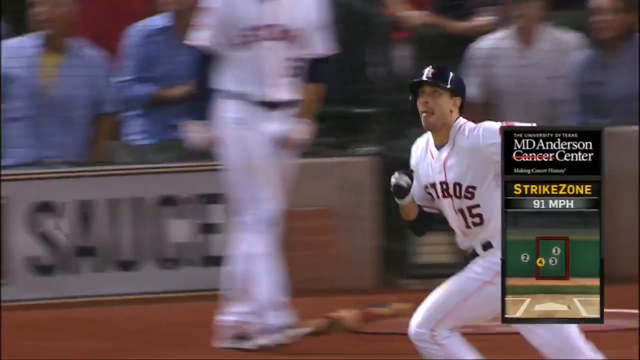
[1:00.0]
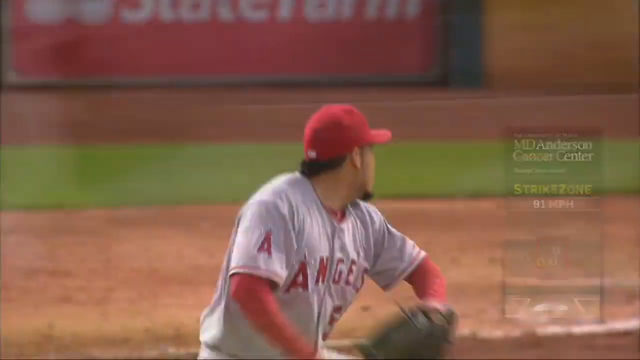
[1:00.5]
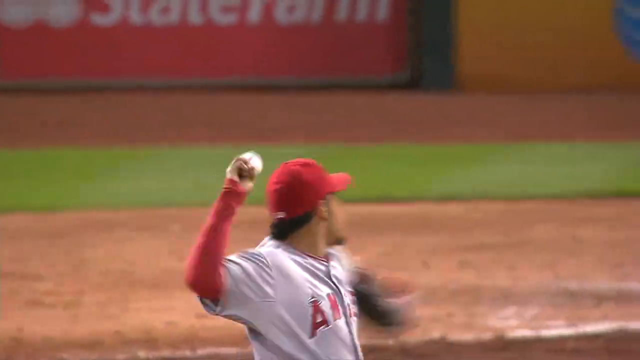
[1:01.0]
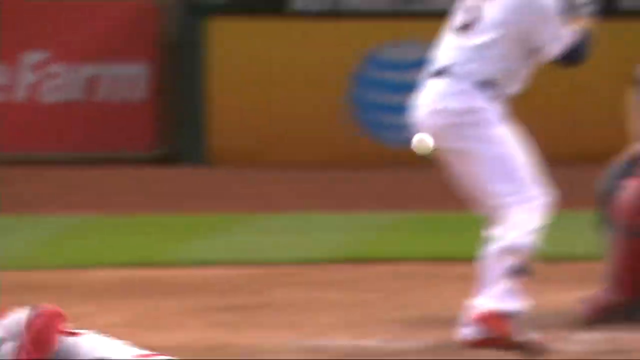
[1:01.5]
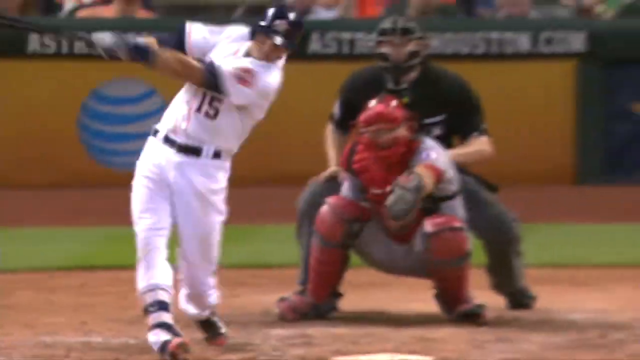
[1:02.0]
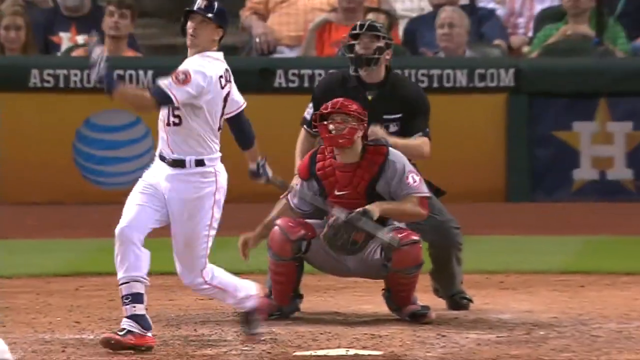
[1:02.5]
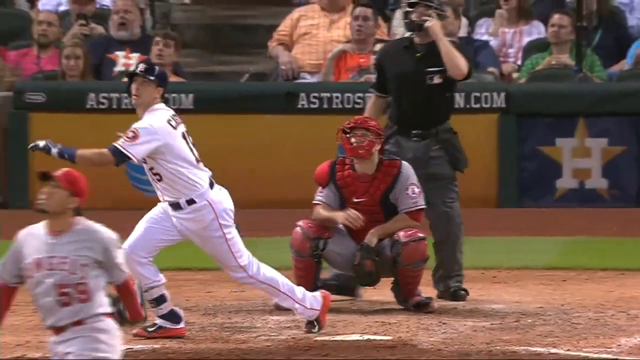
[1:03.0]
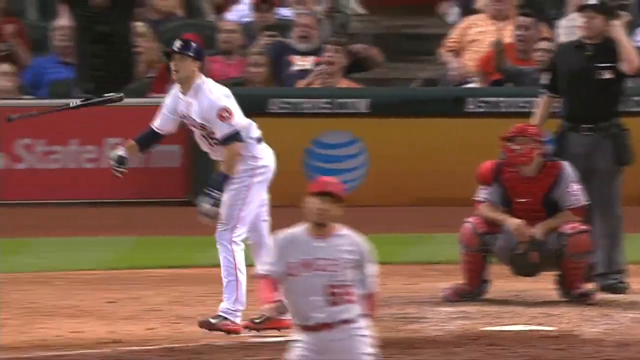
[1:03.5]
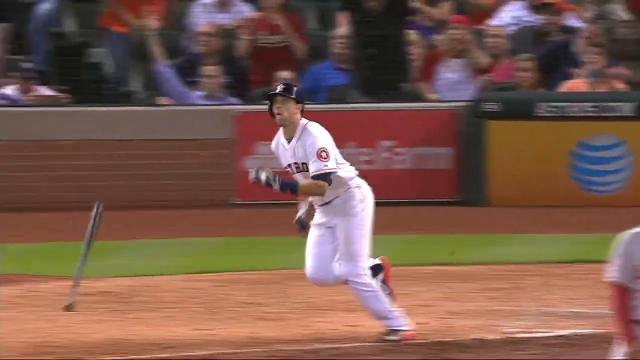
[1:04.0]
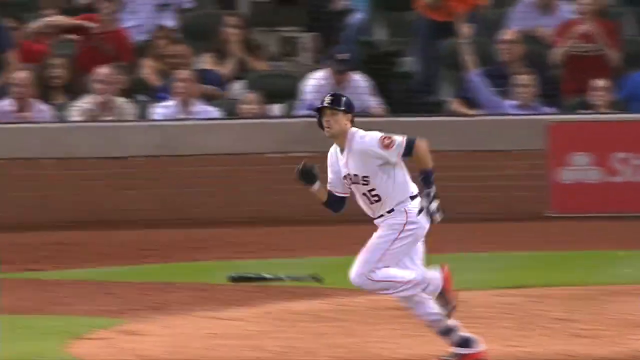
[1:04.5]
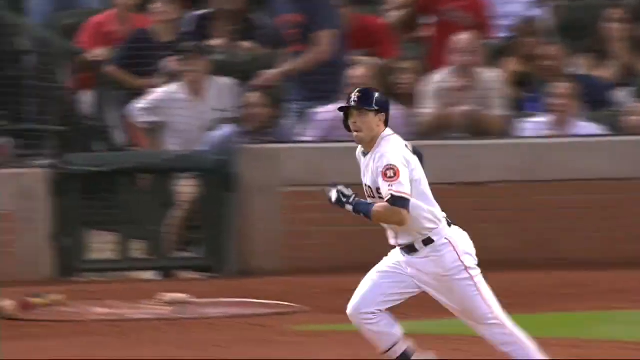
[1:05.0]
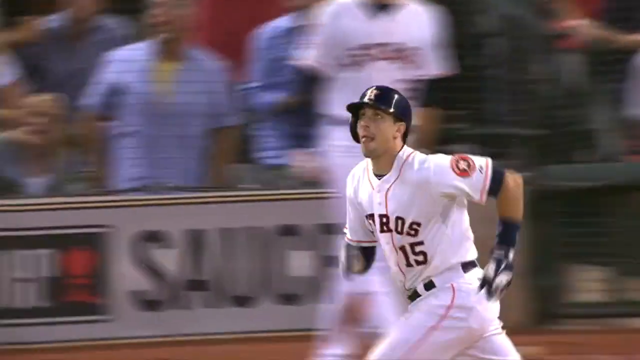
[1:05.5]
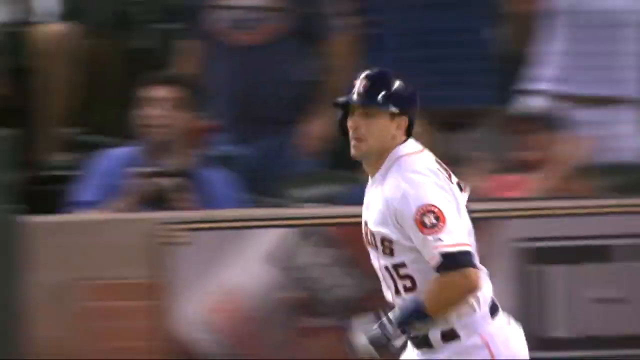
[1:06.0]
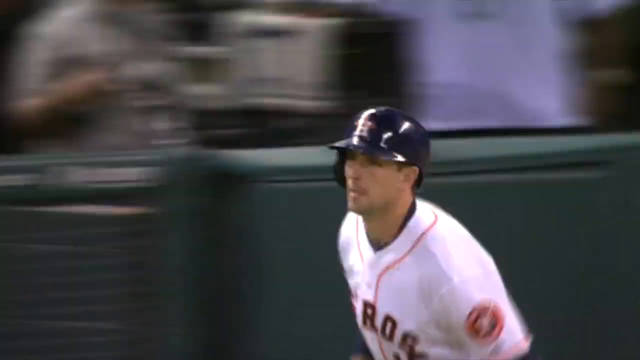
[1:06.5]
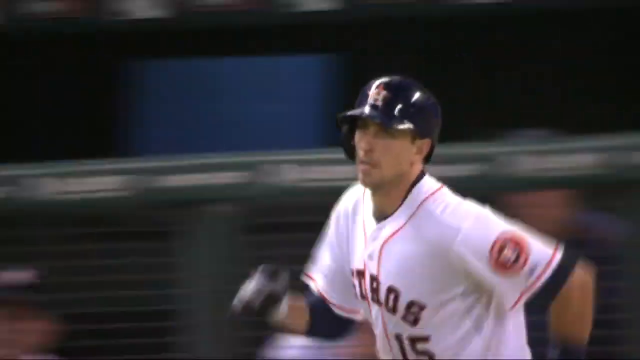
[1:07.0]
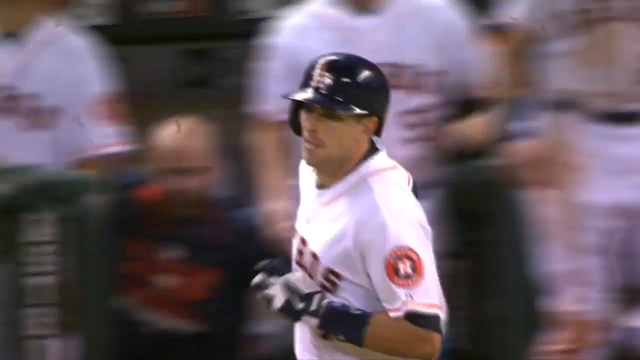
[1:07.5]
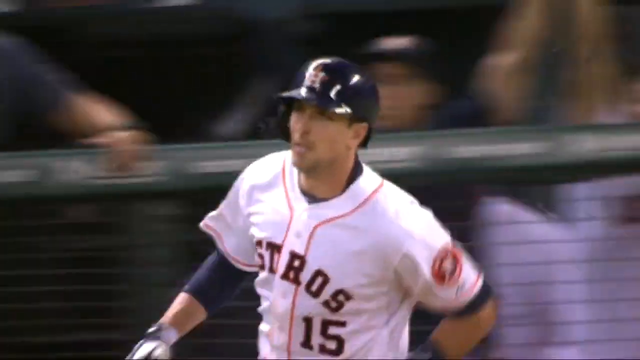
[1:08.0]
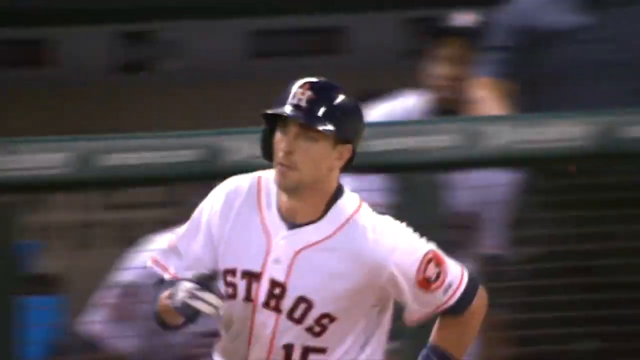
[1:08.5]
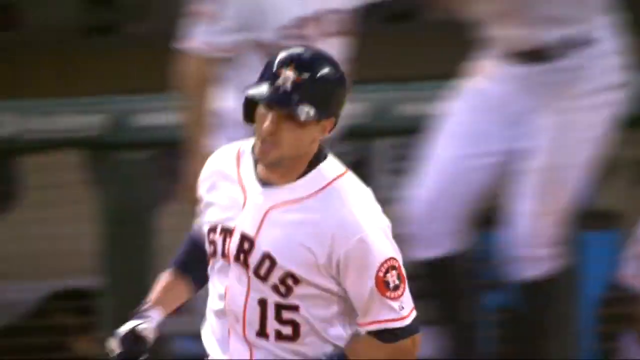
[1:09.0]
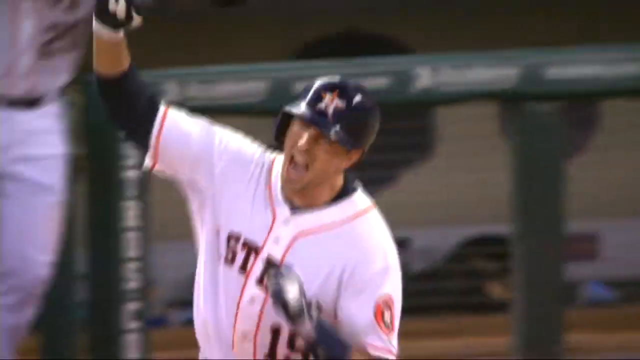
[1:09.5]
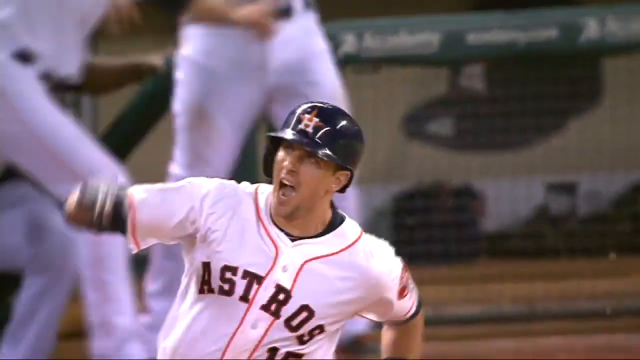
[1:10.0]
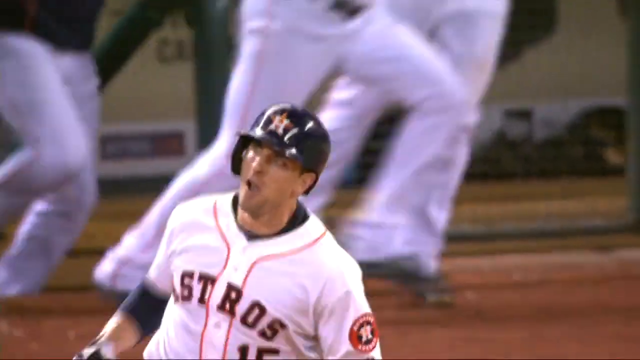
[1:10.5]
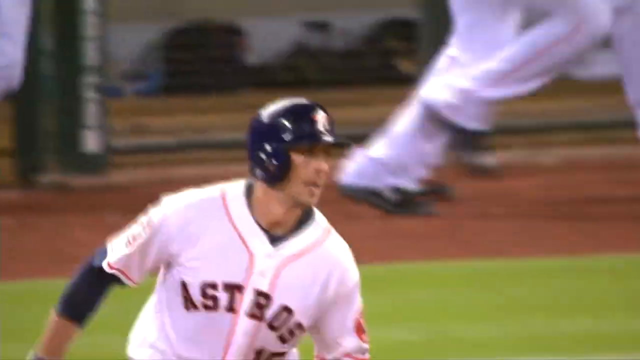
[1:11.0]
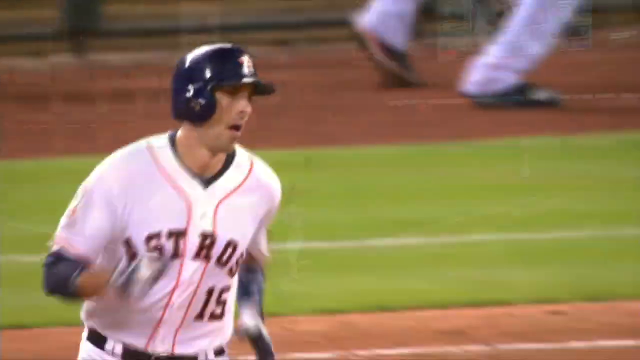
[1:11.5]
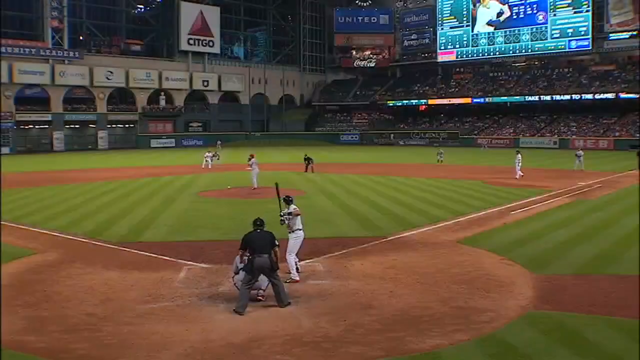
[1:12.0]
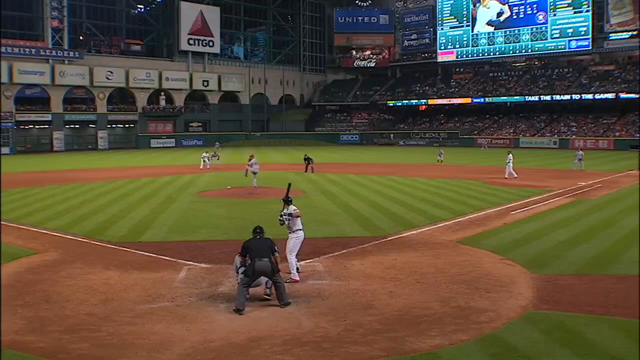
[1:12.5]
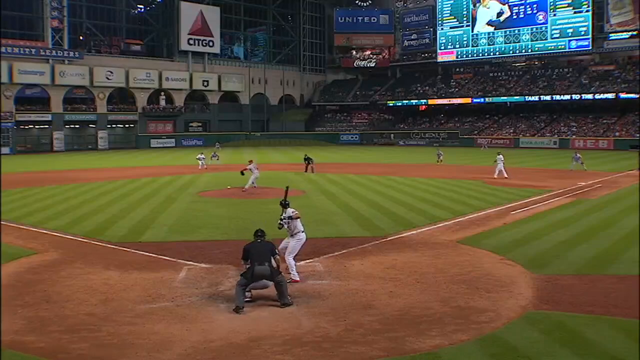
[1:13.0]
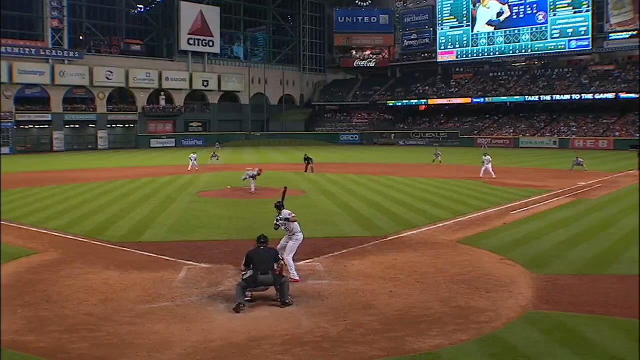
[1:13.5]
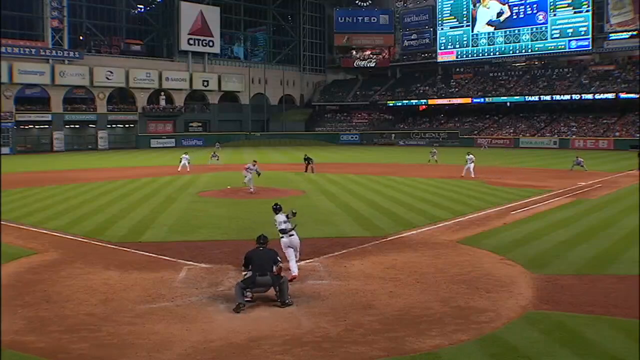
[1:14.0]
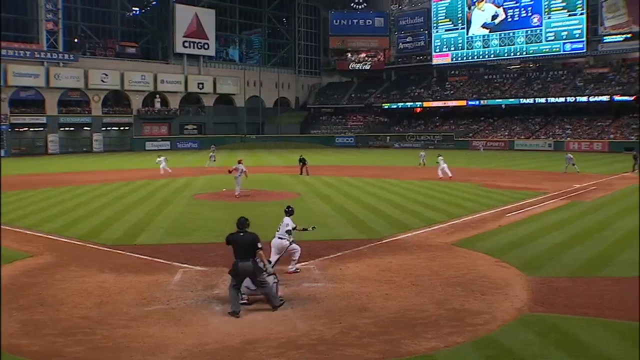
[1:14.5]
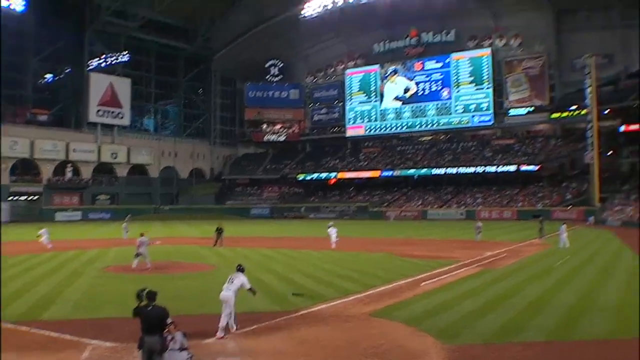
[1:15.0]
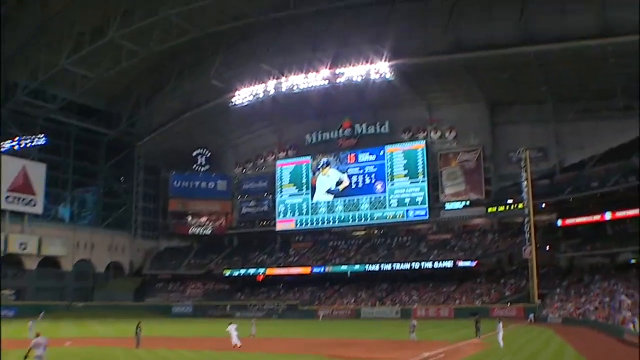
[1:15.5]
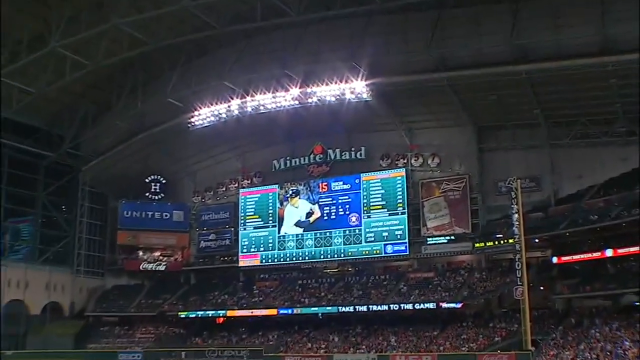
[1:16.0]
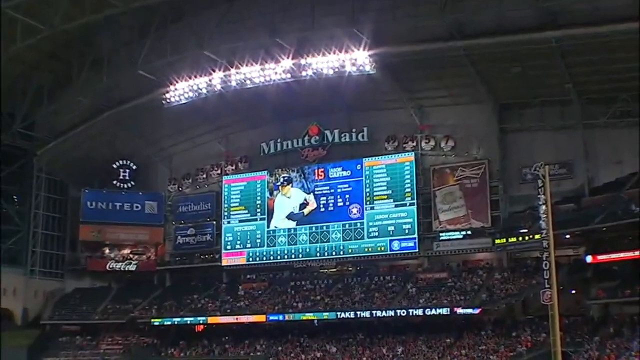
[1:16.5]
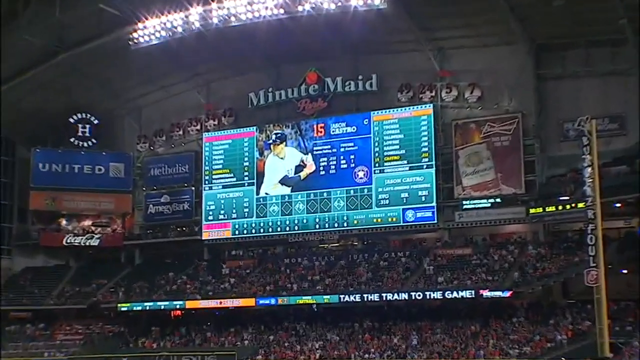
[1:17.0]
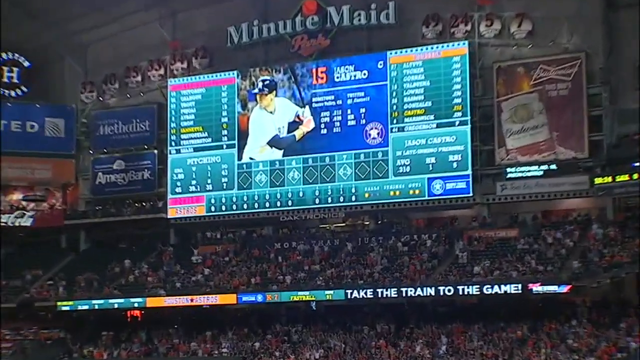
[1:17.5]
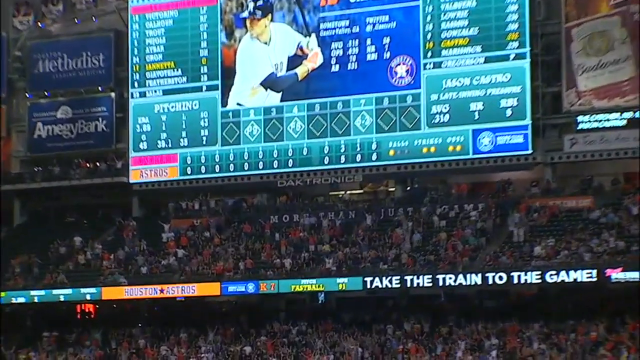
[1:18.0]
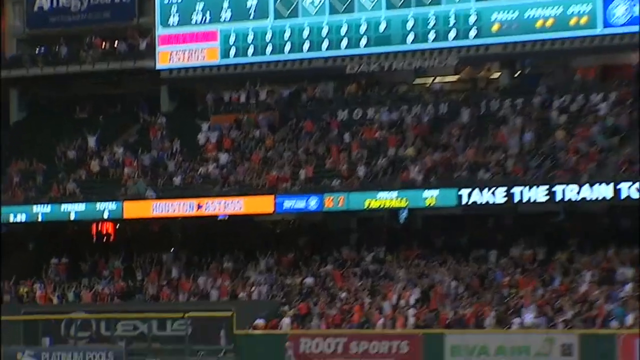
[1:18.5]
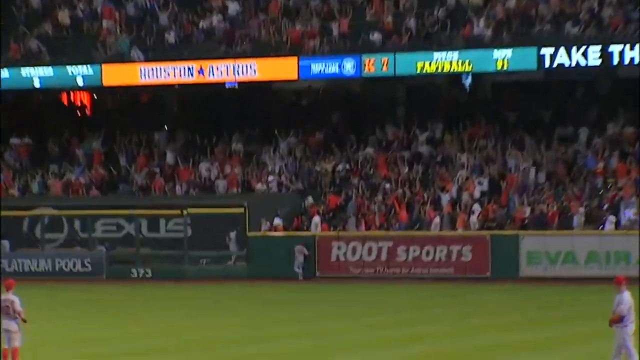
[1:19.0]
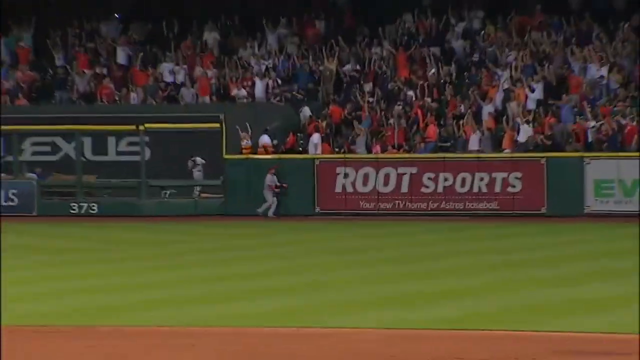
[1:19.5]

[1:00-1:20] Another highlight, a slow-motion replay, shows the game-winning home run by the left-handed Houston Astros player against the Anaheim Angels. He hits the ball, immediately flips the bat and starts jogging toward the base. His arm goes up in celebration before the view pans out over the entire stadium, showing a Minute Maid sign that appears to be the scoreboard and sponsorships including the Astros, United (apparently United Airlines) and Coca-Cola, with the big yellow foul pole on the right-hand side. As the ball crosses the fence, the fans jump up and down, reacting to their home team winning on a walk-off home run.